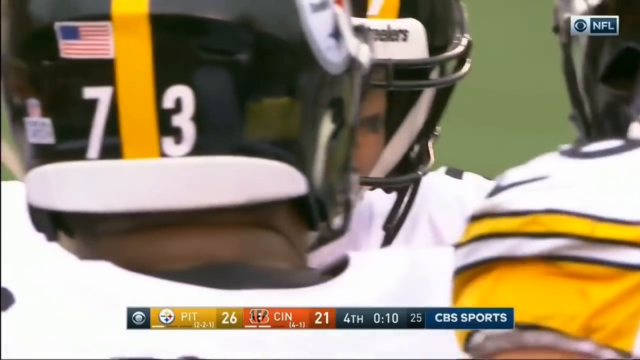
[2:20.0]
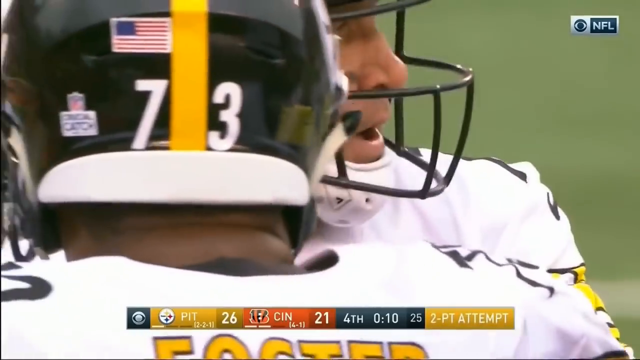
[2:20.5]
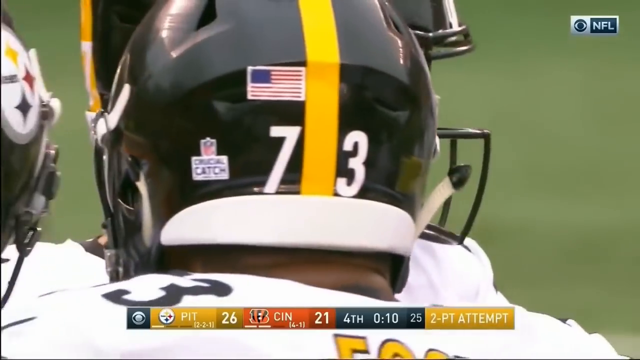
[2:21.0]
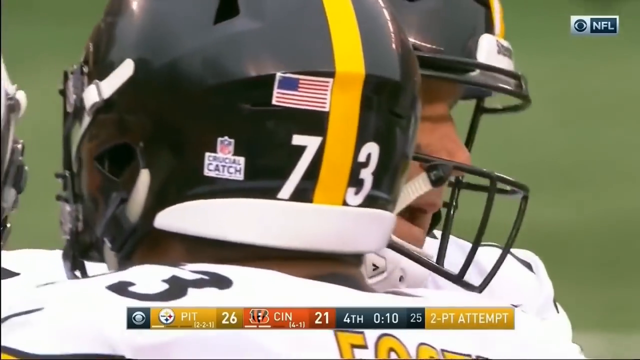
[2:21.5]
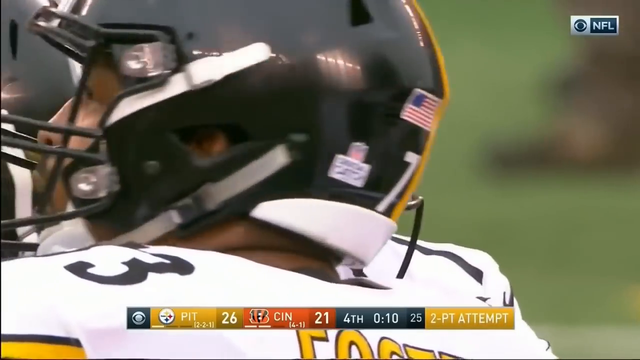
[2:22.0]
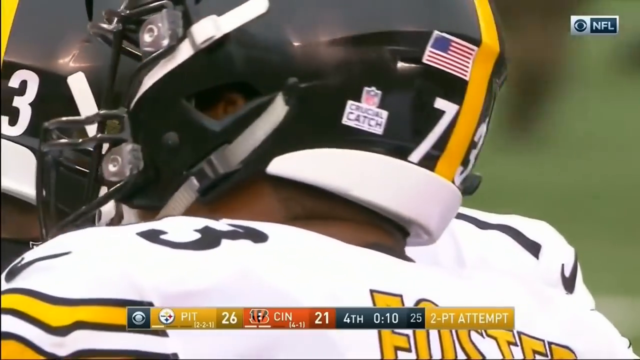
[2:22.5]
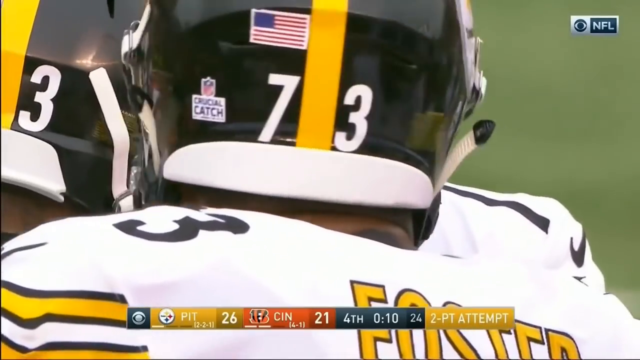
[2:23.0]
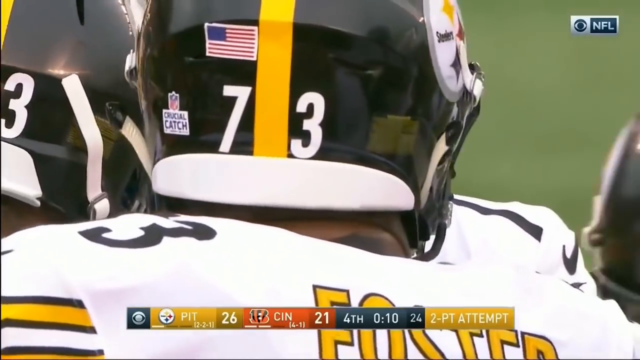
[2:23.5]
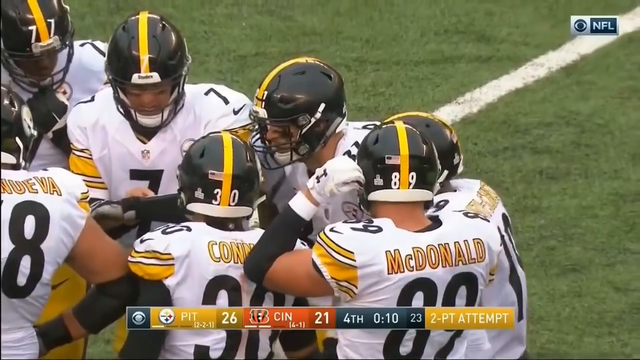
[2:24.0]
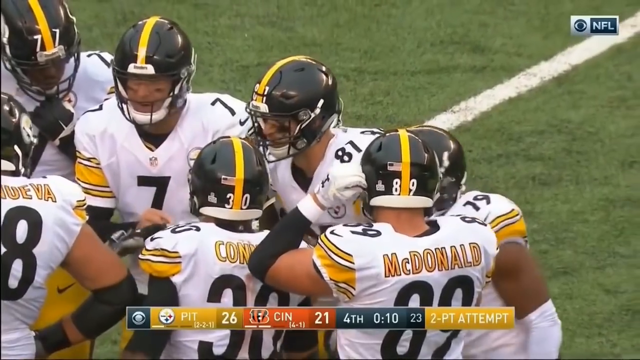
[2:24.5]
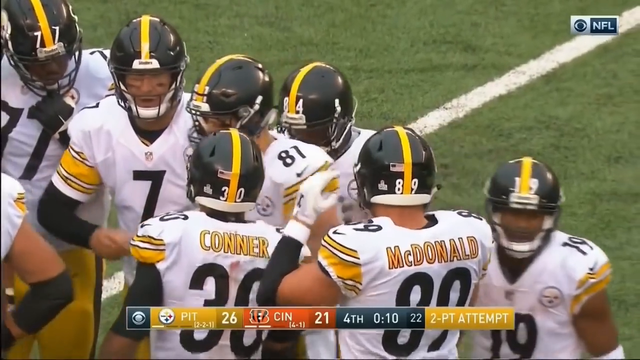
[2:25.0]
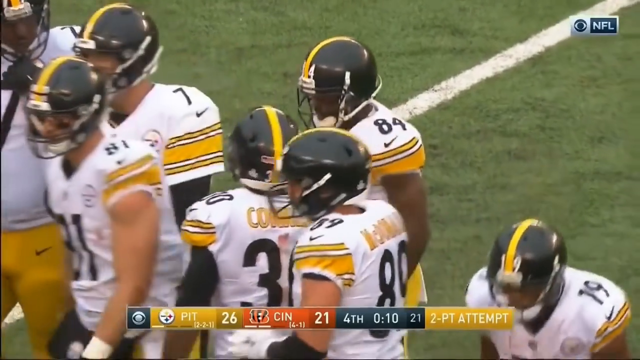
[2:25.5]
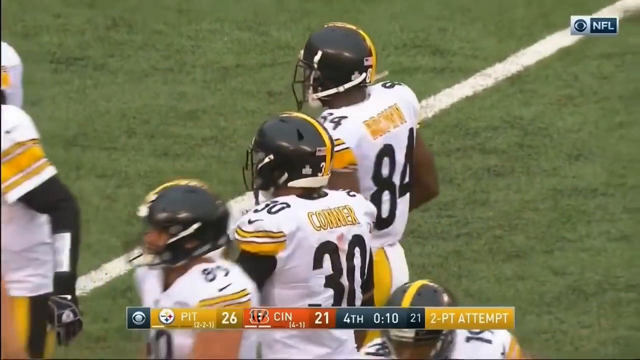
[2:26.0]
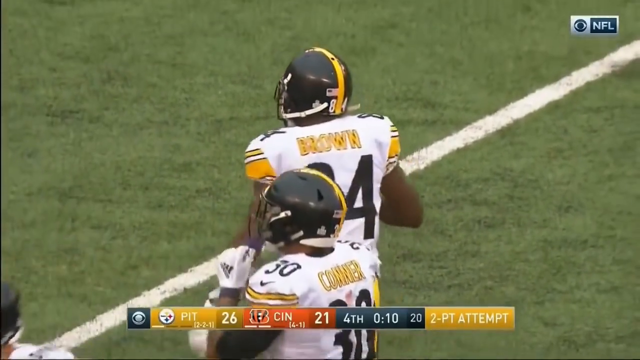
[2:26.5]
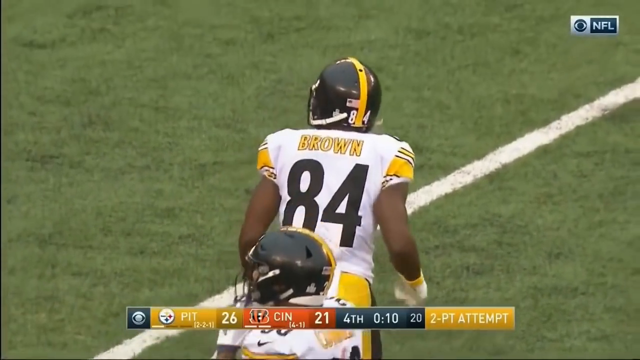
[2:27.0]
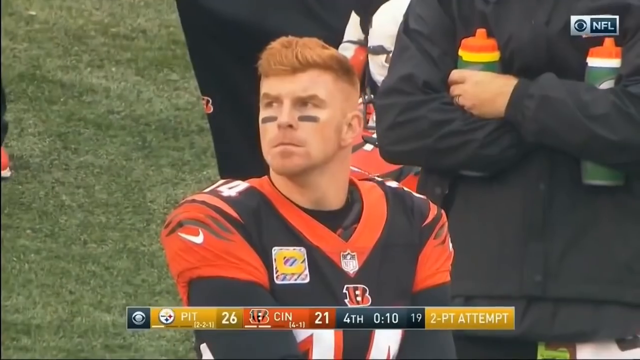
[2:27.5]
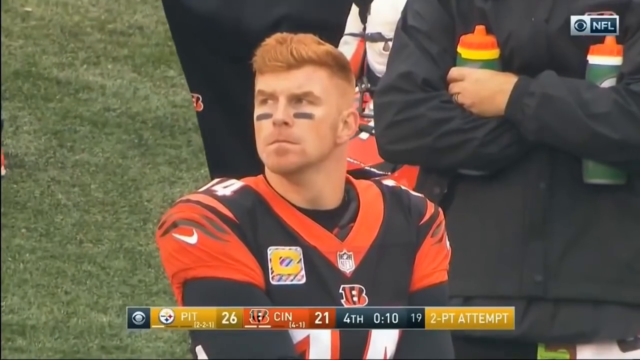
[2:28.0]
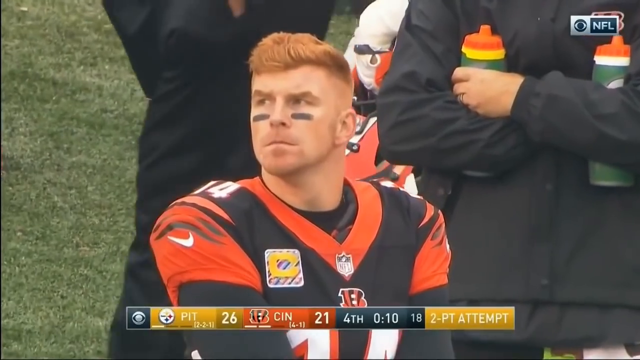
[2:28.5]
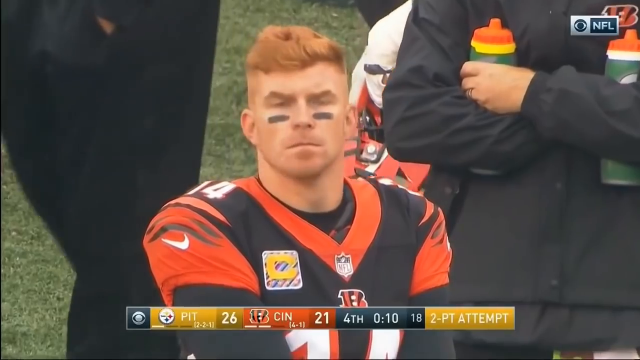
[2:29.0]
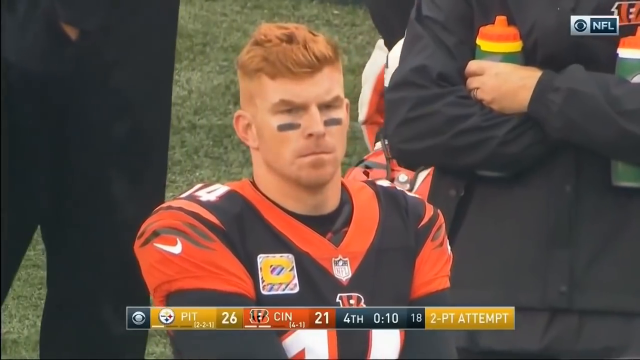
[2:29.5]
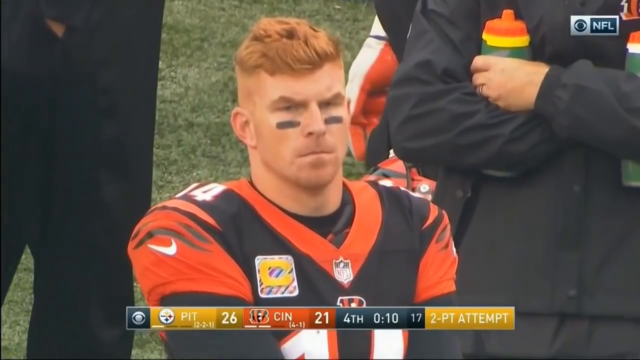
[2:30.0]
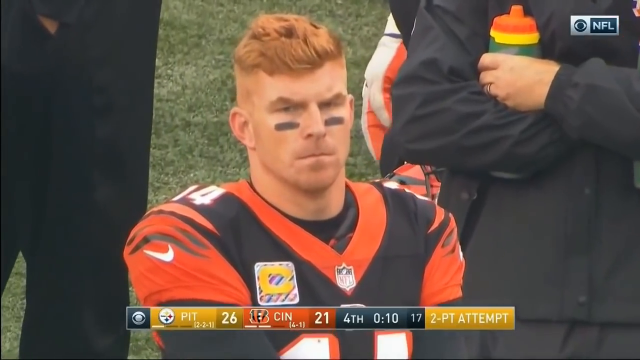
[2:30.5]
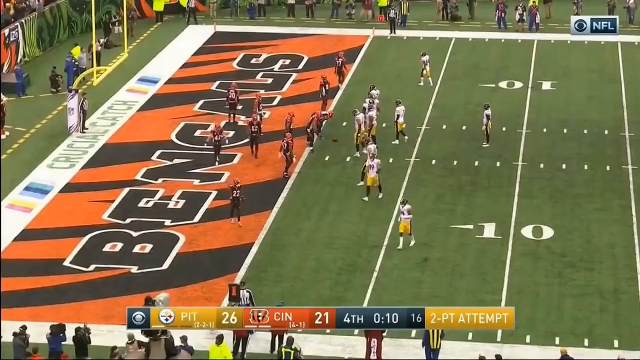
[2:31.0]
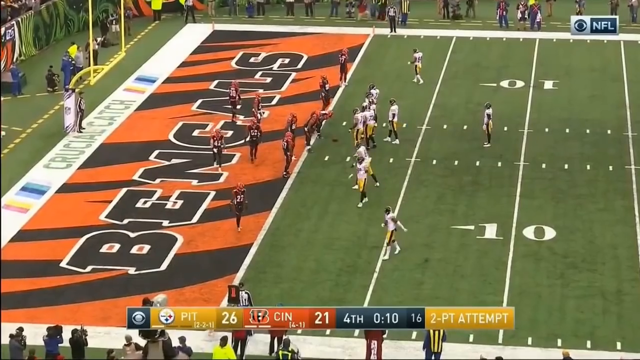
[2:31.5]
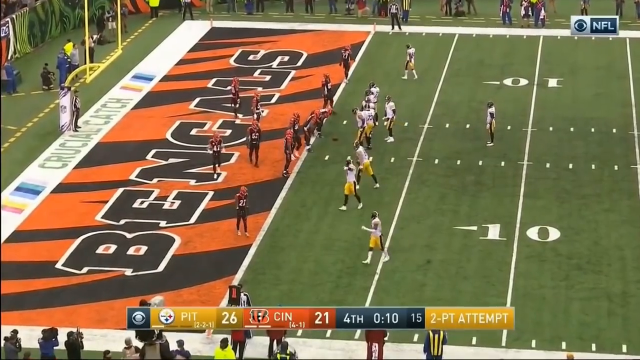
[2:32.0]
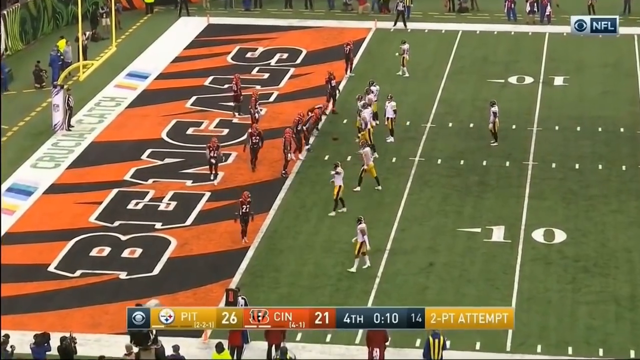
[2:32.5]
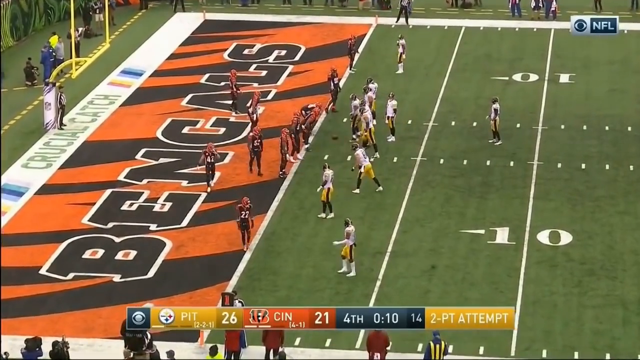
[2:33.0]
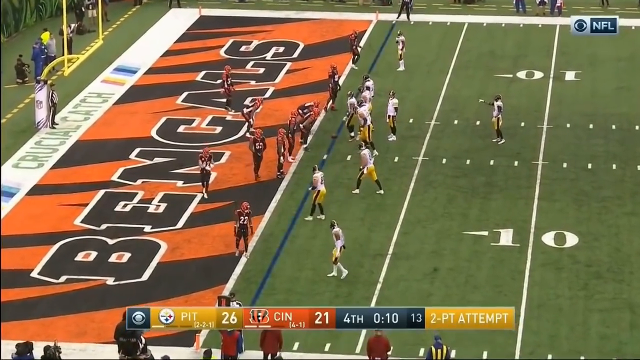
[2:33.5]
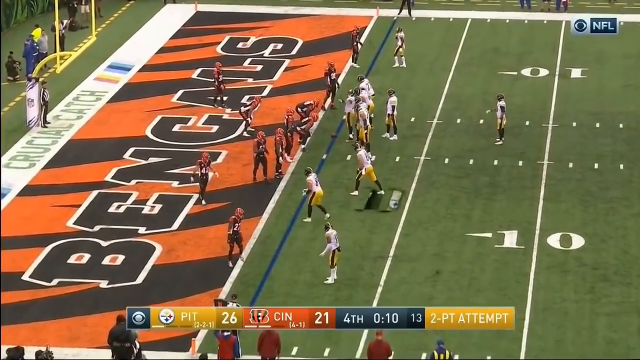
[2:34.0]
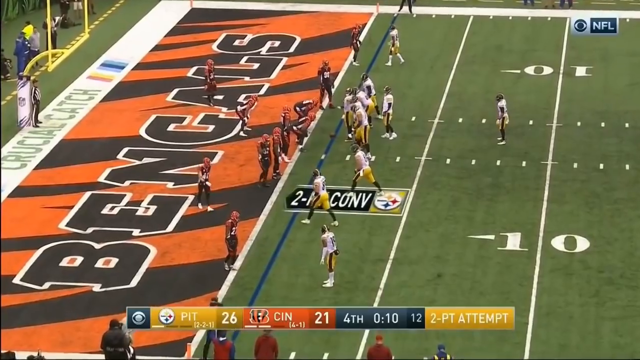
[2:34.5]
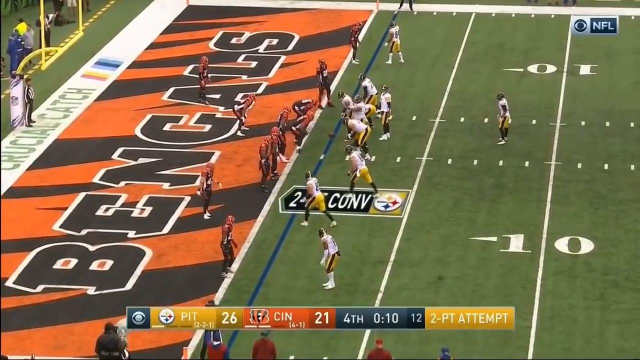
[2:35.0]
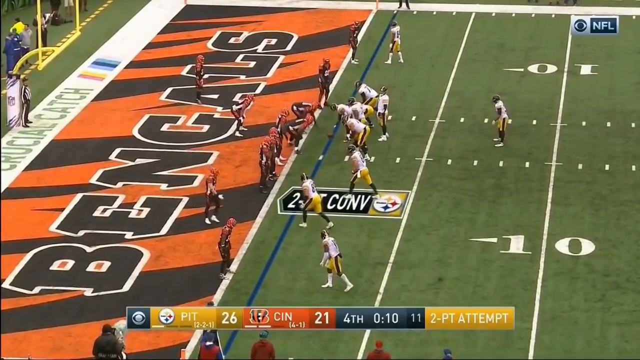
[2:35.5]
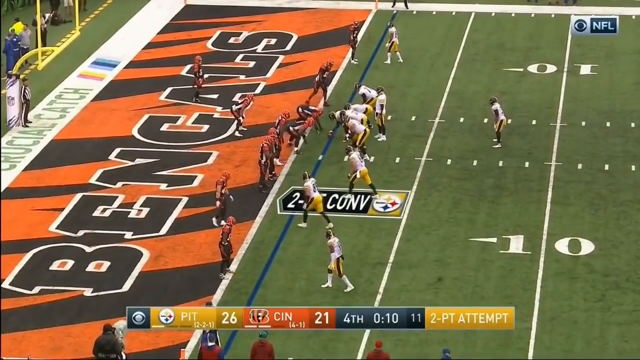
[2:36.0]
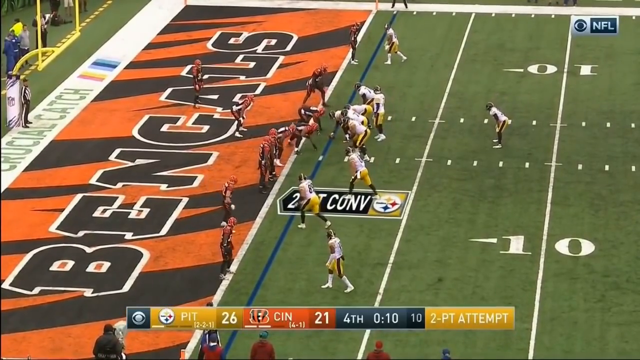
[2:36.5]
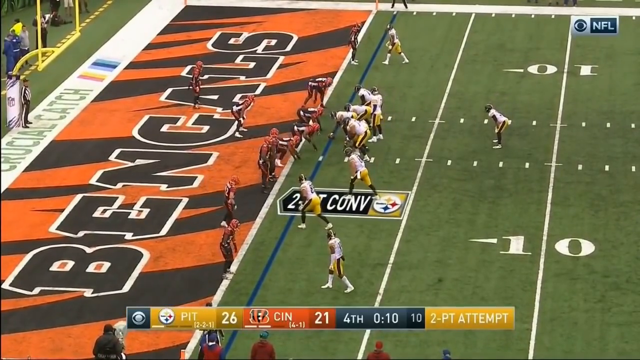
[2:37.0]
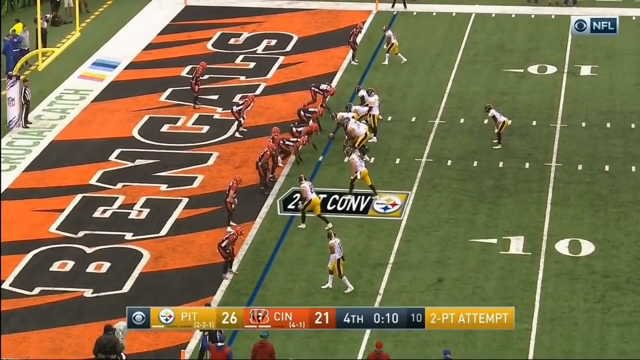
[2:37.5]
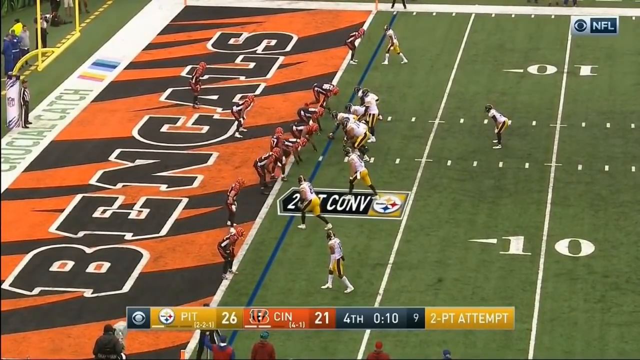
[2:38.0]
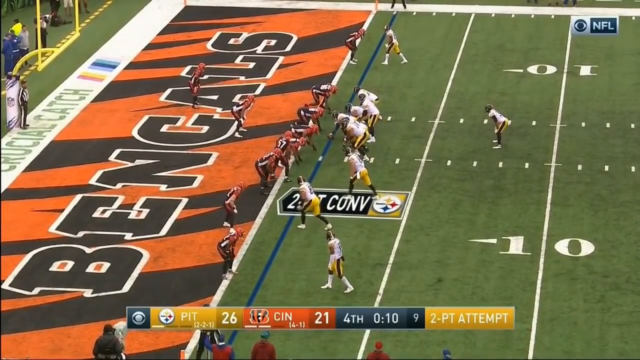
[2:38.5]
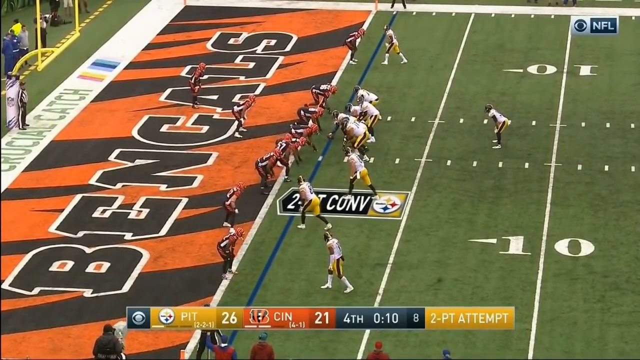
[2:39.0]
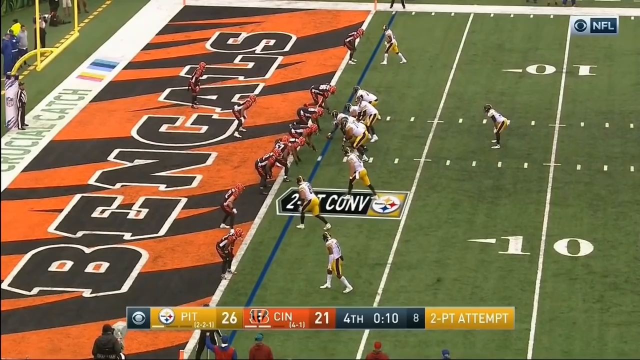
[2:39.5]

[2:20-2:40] The players appear to be huddling to talk about what to do next. Number 73 has his back to the camera, with the number 73 on the back of his helmet. The shot zooms out a little, showing several players huddled together. One is named McDonald; the other names are hard to make out, but the numbers 7, 79, 81, 89 and 30 are visible. Number 30 is Connor and number 84 is Brown. The huddle breaks apart, and the view moves to a Bengals player standing on the sideline with black smudges under his eyes and short-cropped red hair, looking up at the scoreboard. To his right a man stands holding two Gatorade bottles in the crooks of his arms.